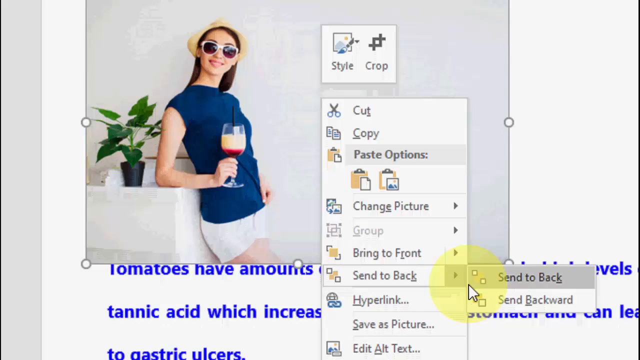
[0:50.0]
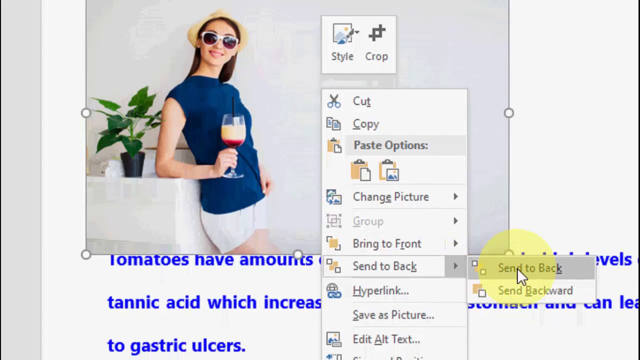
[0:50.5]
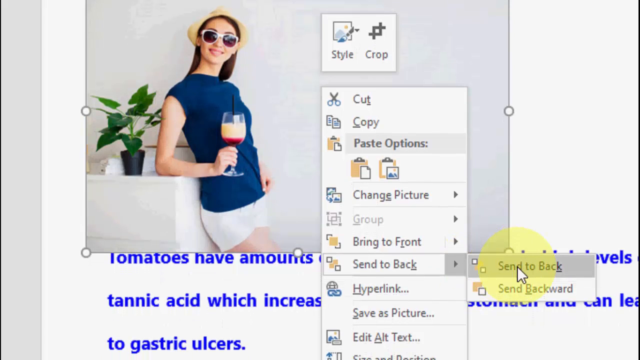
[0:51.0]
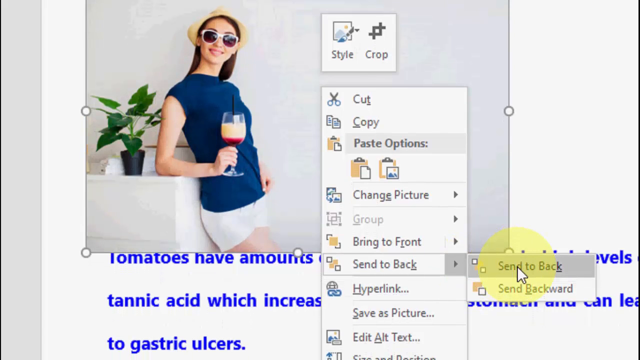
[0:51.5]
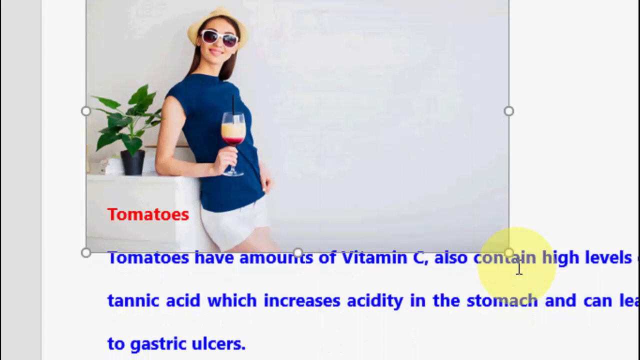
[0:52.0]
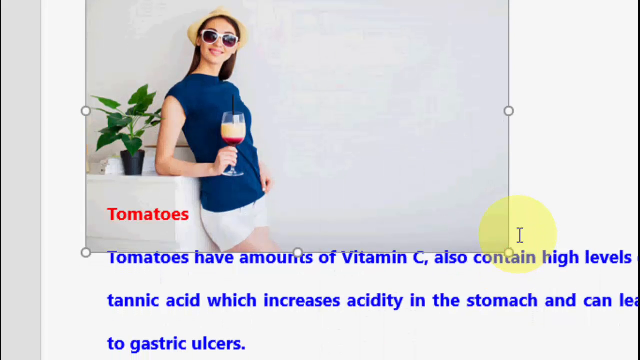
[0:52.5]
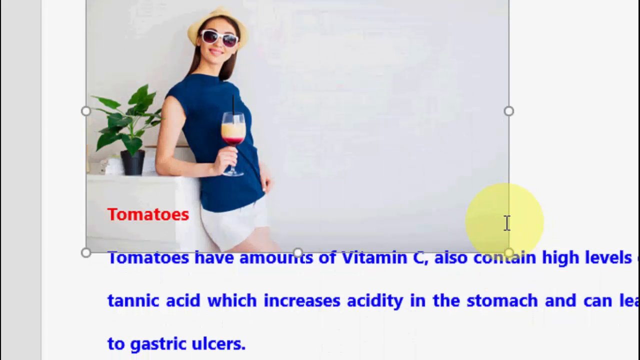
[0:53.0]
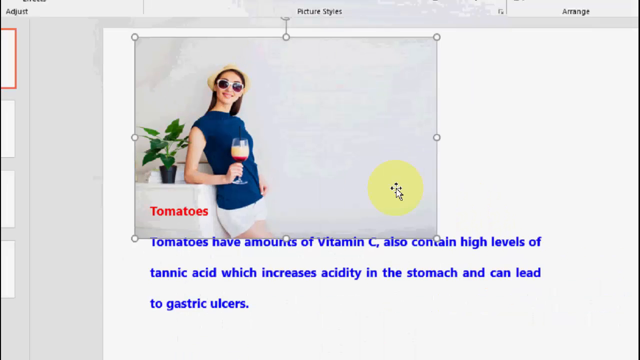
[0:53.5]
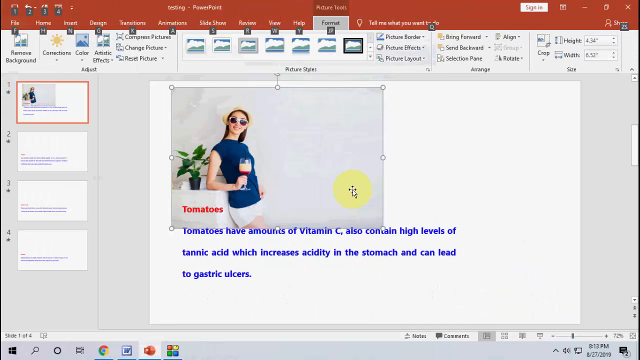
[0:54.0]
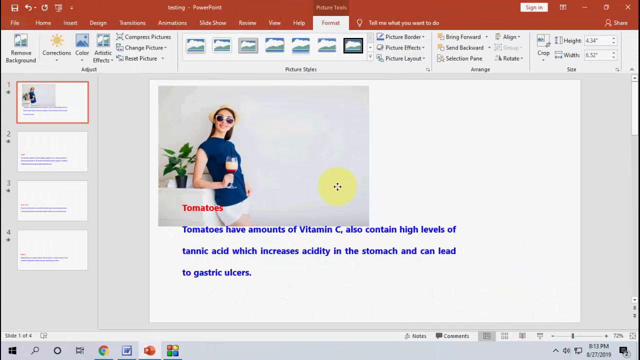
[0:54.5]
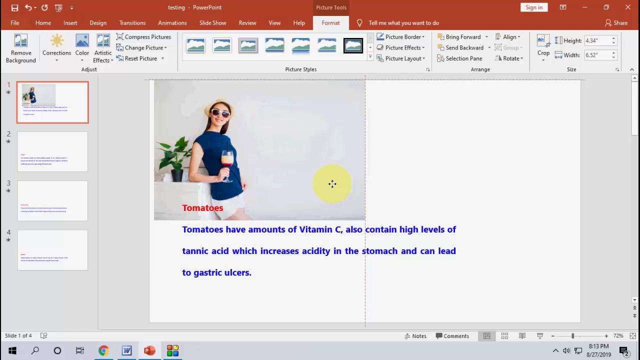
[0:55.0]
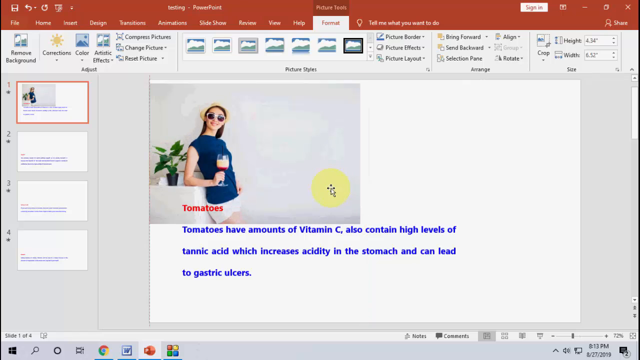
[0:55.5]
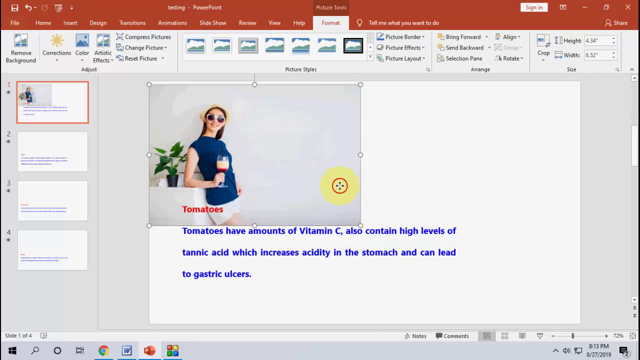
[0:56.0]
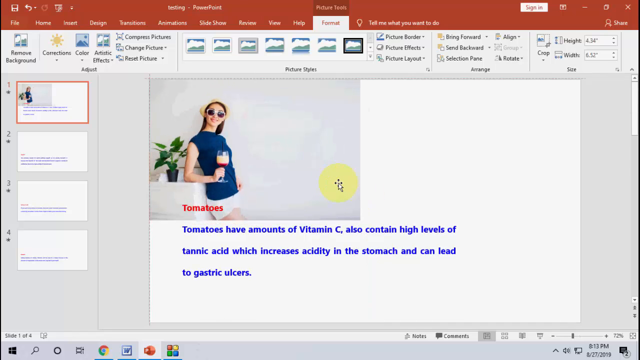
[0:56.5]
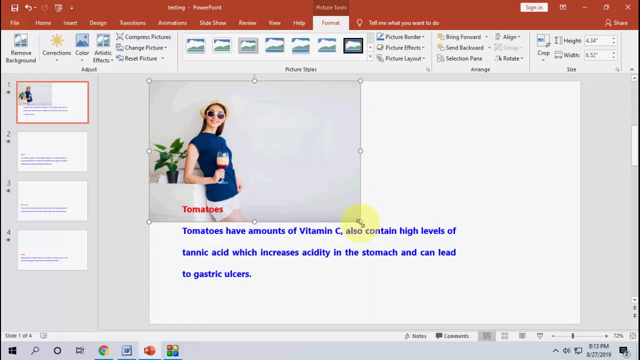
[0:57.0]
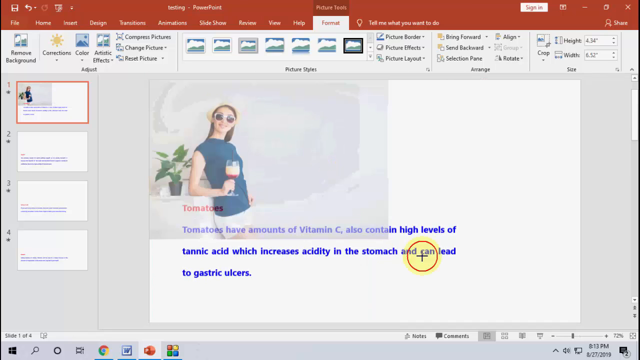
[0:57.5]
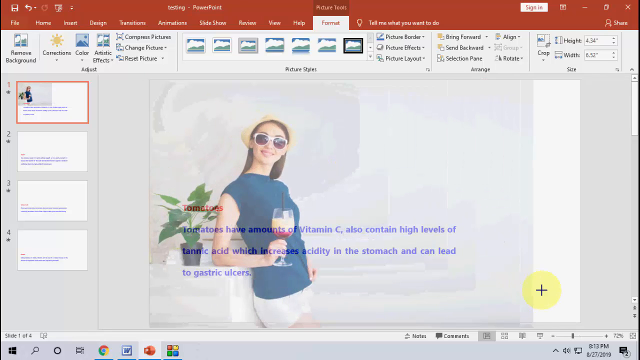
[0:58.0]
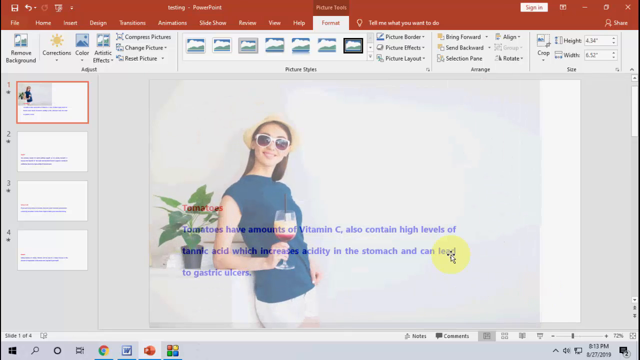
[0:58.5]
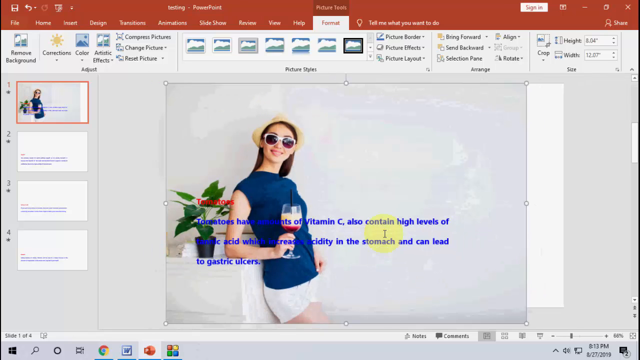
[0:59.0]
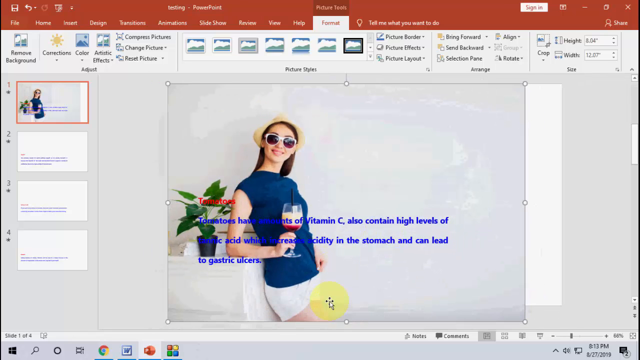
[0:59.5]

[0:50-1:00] A PowerPoint slide is being edited, with a picture in the middle of the slide covering some of the text. The picture shows a white woman looking at the camera and smiling; she looks young, maybe in her 20s. She holds a wine glass with red wine at the bottom and wears sunglasses, a tan hat, a blue sleeveless shirt and white shorts. She leans against a white table with a pot of plants on it; the plant is in a black vase and has wide, bright green leaves. The background is white. No person is visible, only the screen and the cursor. The cursor hits send to back and the picture disappears behind the text. The cursor then moves the picture to the top left corner and drags it to expand it so it takes up more of the slide.